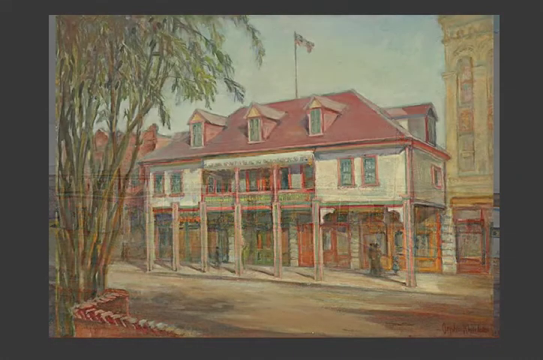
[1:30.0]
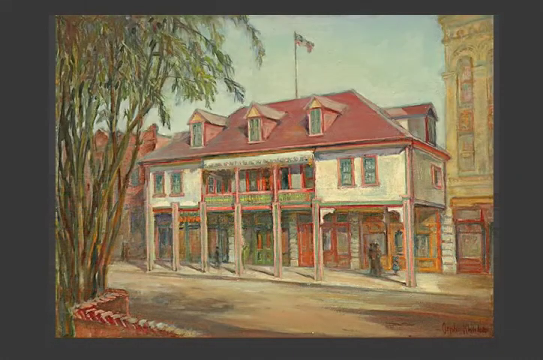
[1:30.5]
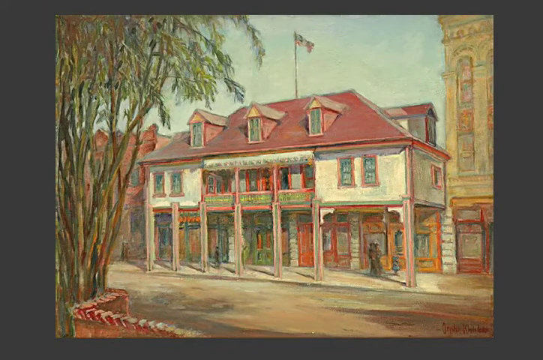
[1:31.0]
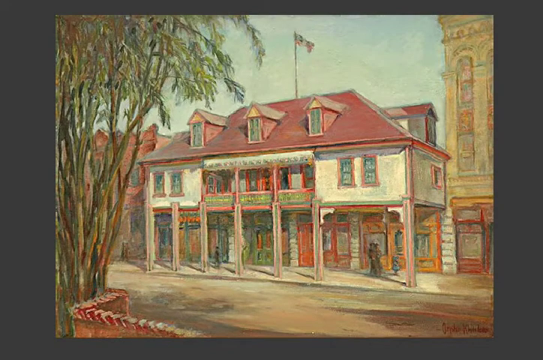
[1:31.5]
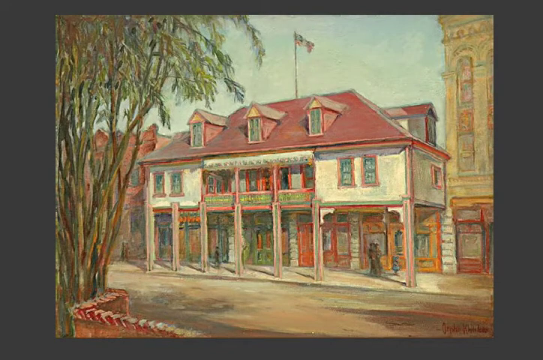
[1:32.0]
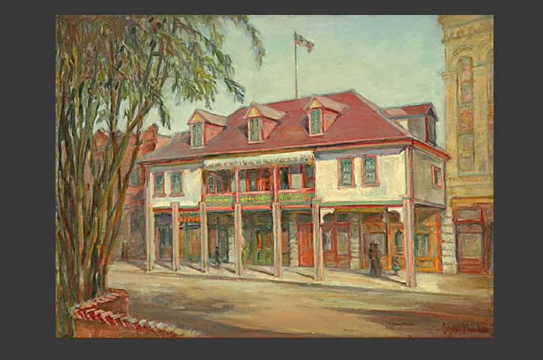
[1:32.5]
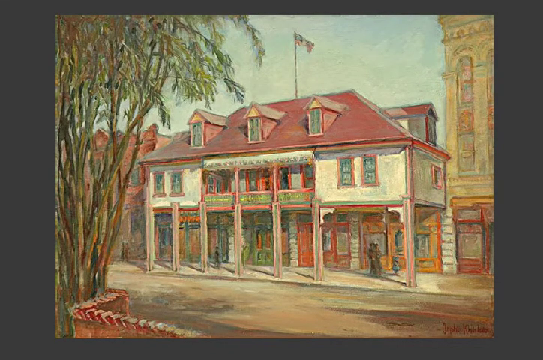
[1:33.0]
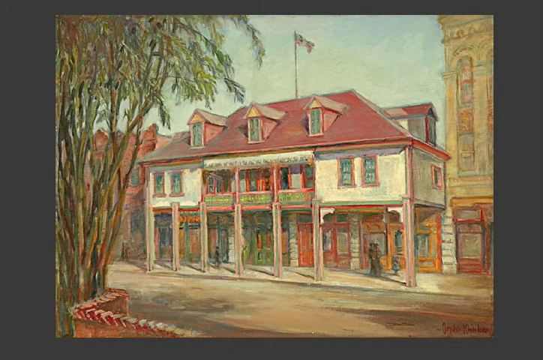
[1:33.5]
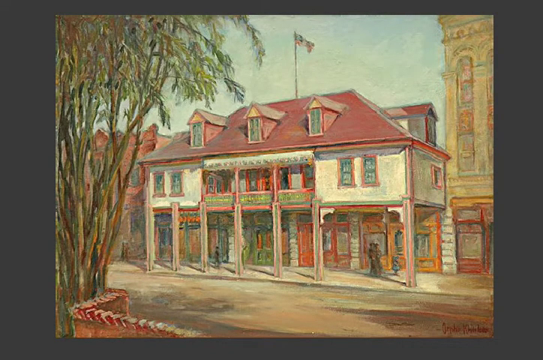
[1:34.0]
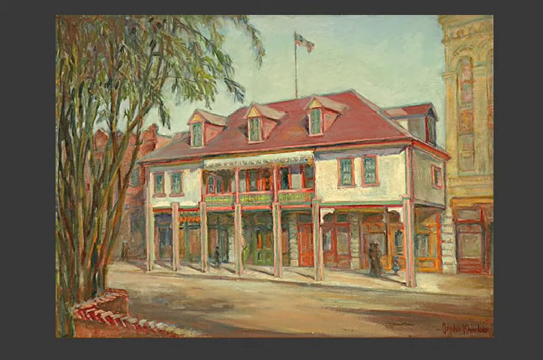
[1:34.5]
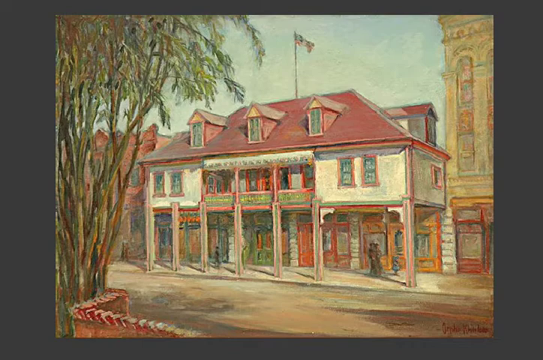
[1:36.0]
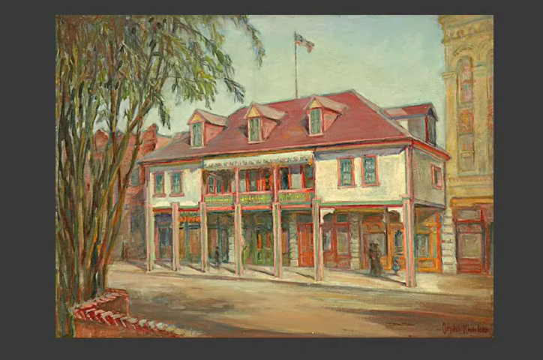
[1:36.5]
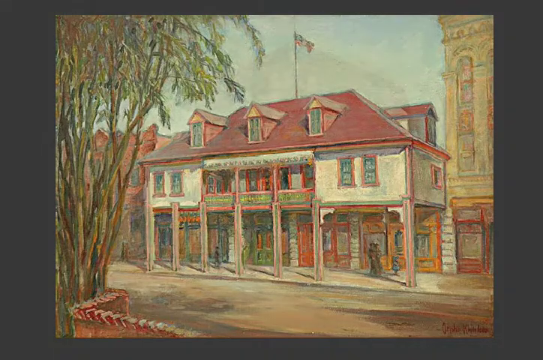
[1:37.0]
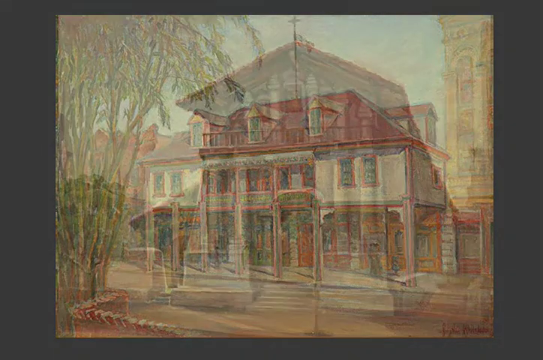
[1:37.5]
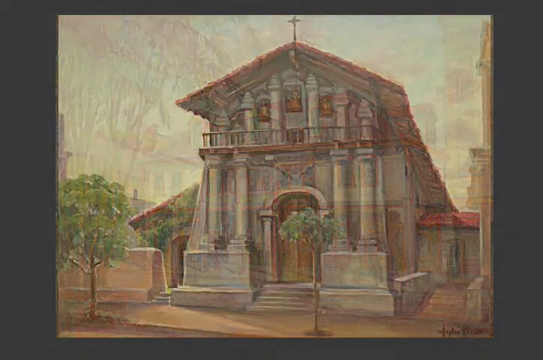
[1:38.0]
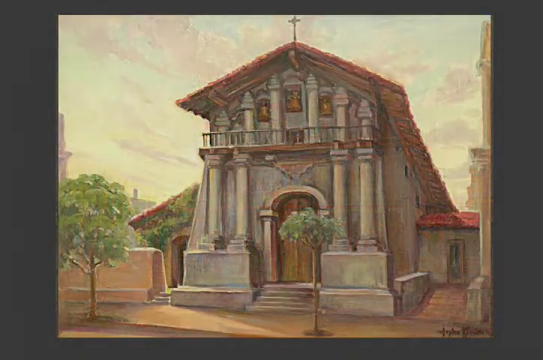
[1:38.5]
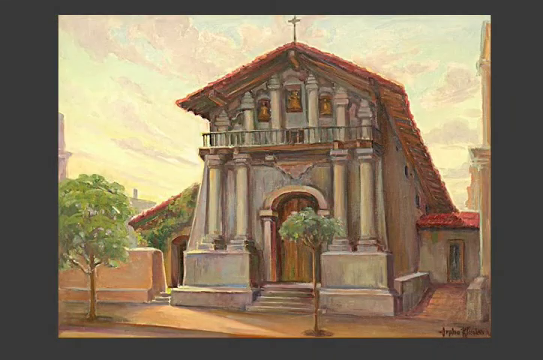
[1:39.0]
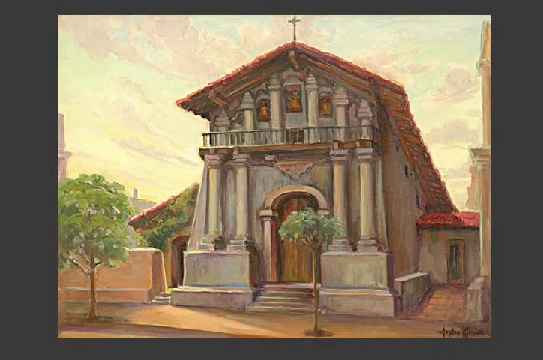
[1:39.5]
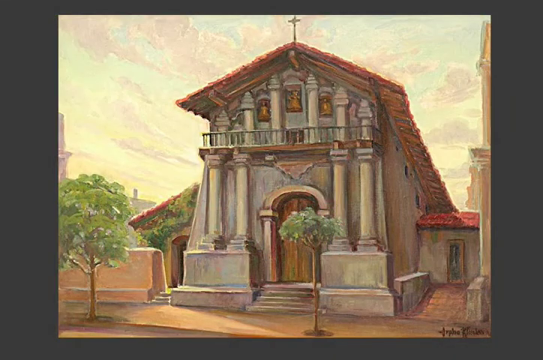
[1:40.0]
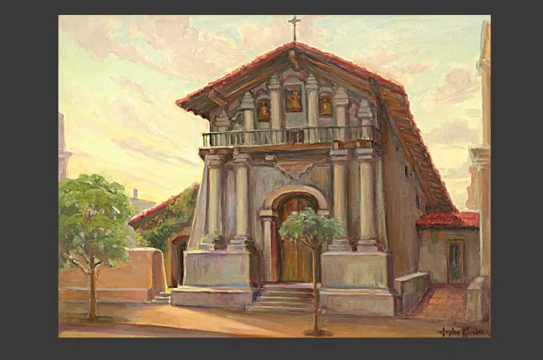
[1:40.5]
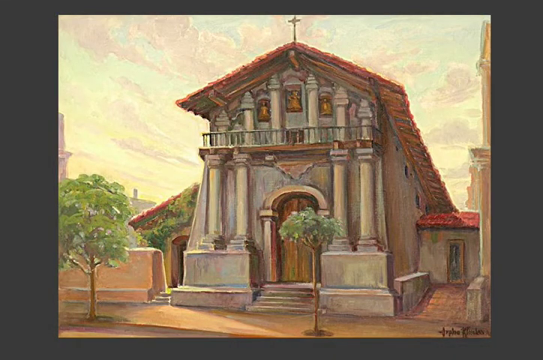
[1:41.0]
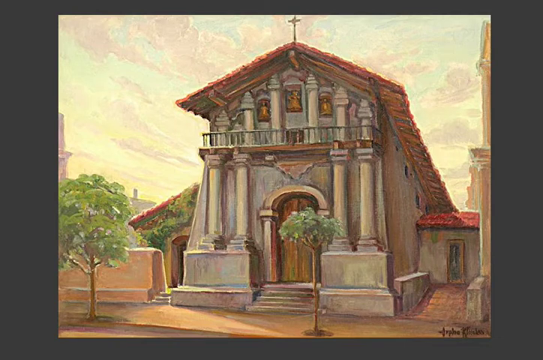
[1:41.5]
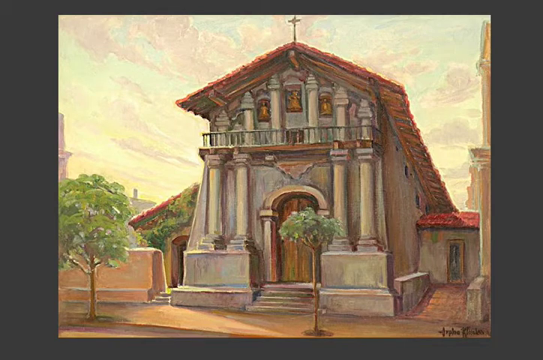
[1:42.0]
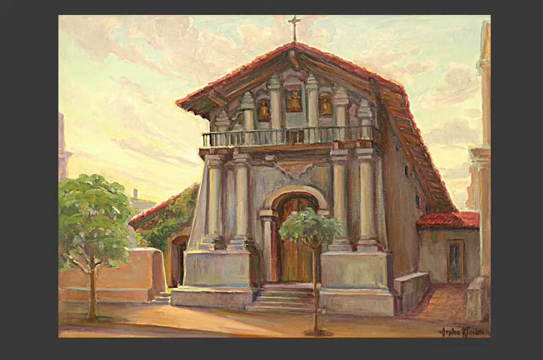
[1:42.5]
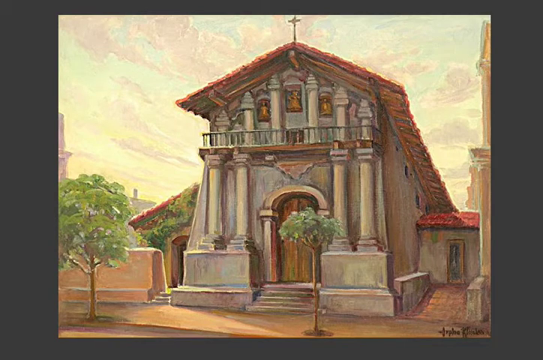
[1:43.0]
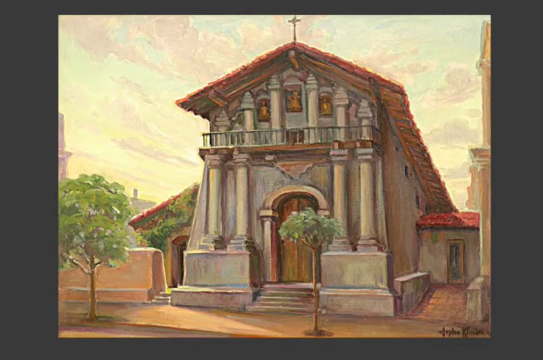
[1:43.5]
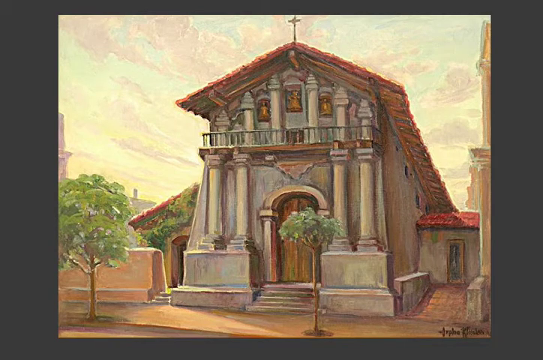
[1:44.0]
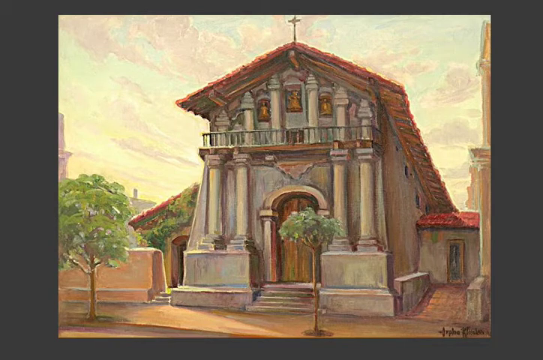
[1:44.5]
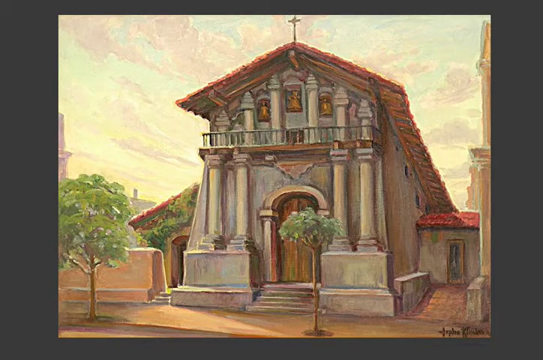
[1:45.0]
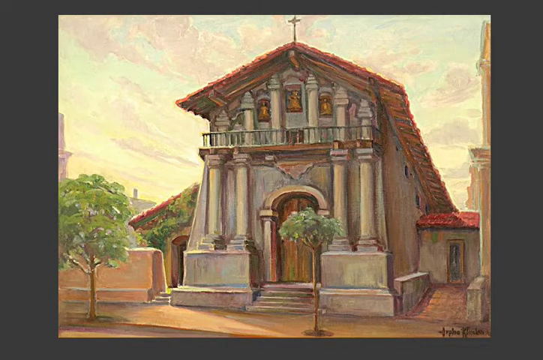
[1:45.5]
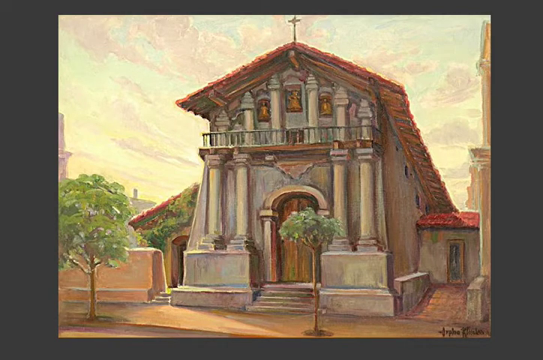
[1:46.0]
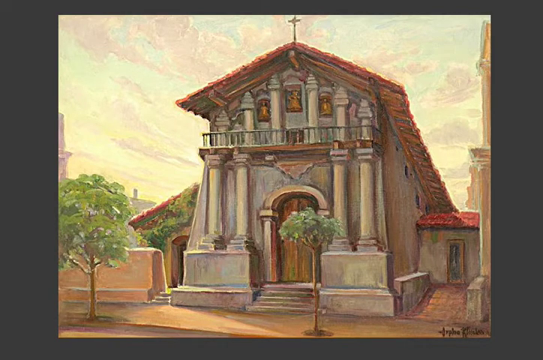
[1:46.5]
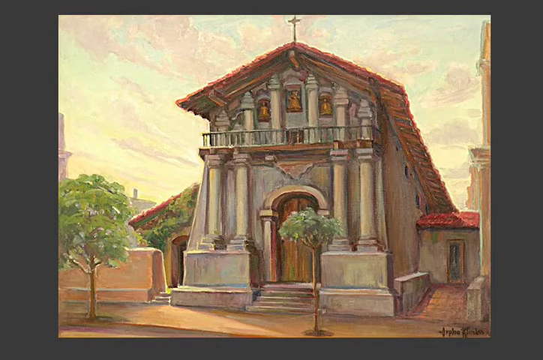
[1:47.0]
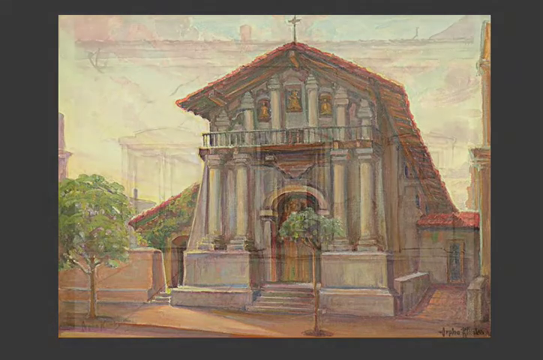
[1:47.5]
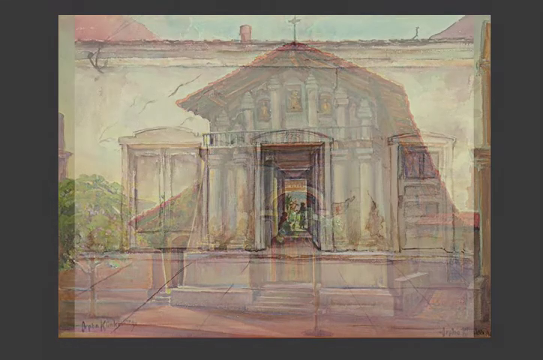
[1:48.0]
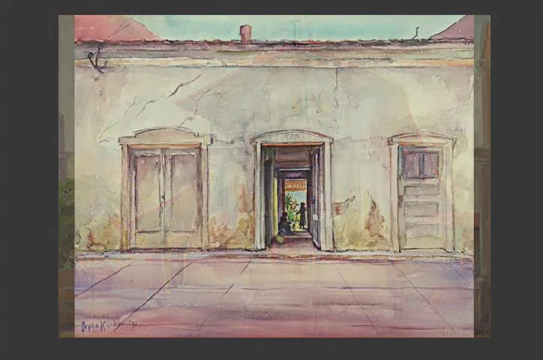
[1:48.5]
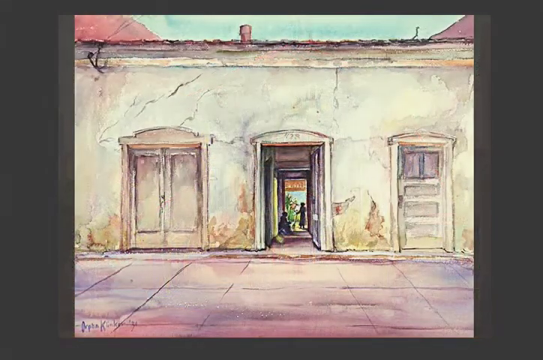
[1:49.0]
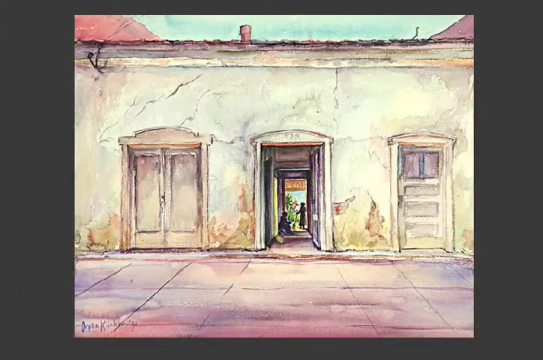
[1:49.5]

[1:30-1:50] Over a gray background is a painting of what looks to be a mansion. It has a red rooftop and three floors including an attic. There seem to be columns on the bottom and a tree in the foreground next to the building. The building is white, with a beige taller building to the right. That painting is replaced with another building that looks like a church. It seems to have a cross on the top and has a red roof. There are six columns on the top row and four columns on the bottom. There seems to be a rounded wooden door in the front, led up to by six steps, and there are some mini trees in the foreground. To the side, the entrance to the rectory is painted. This is replaced by another painting of a building: a flat white building with a brown rooftop. The view is of one wall that has three doorways on it. The middle doorway is open; behind it is another doorway, and beyond that is a silhouette of a person sitting down and a person standing up next to some greenery in the back.